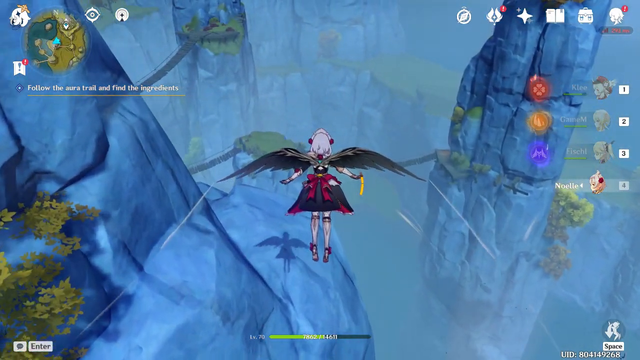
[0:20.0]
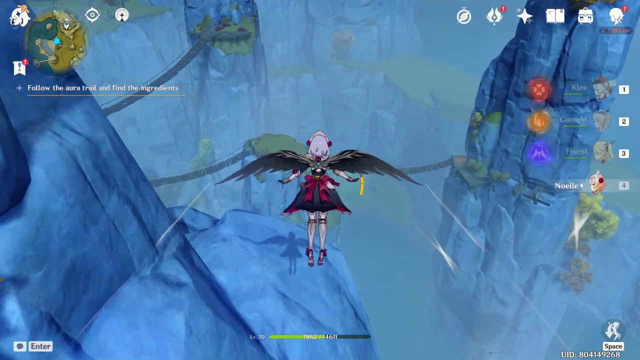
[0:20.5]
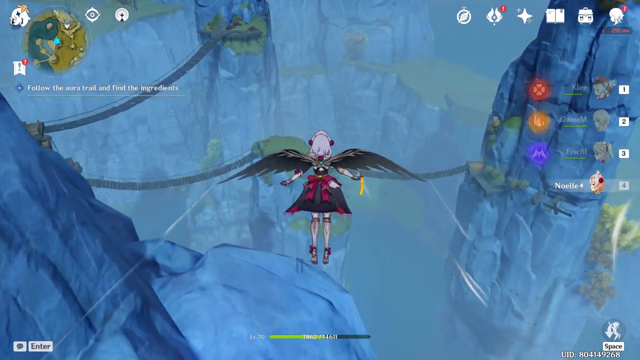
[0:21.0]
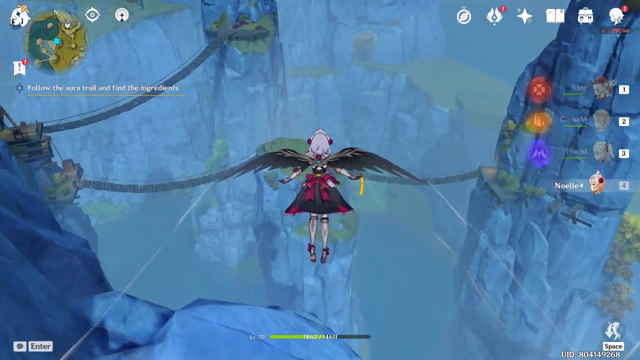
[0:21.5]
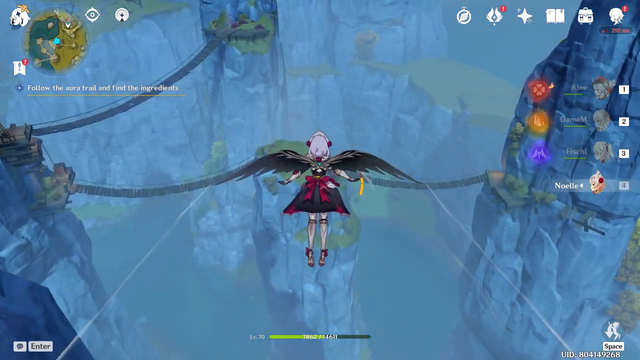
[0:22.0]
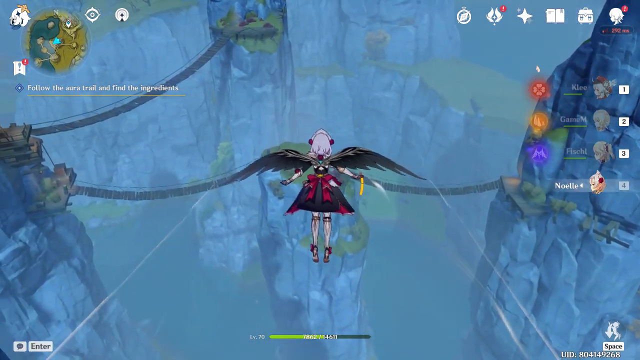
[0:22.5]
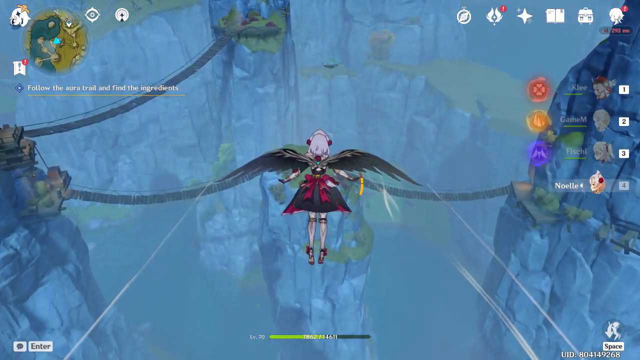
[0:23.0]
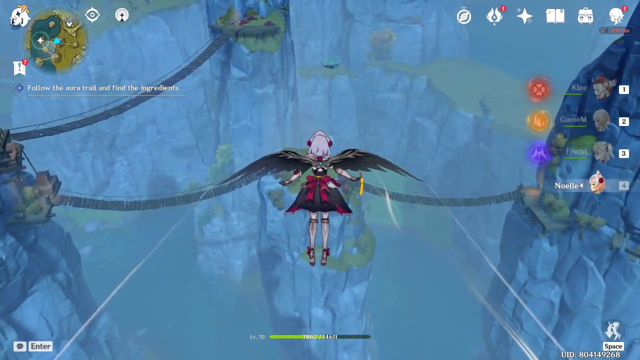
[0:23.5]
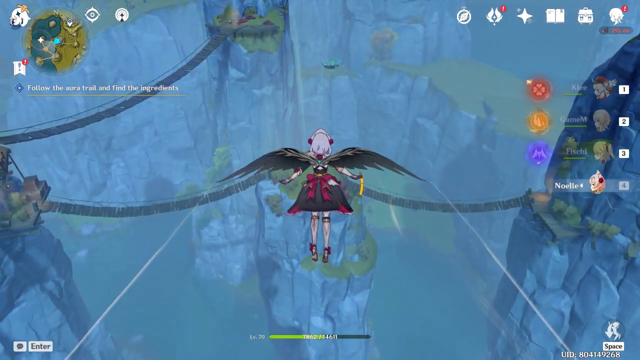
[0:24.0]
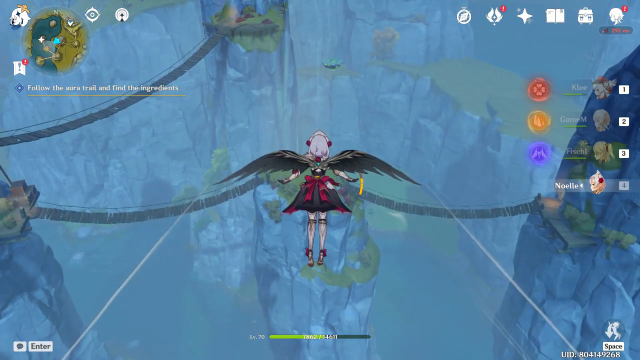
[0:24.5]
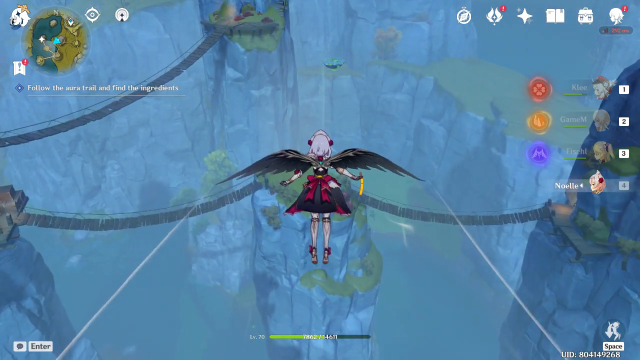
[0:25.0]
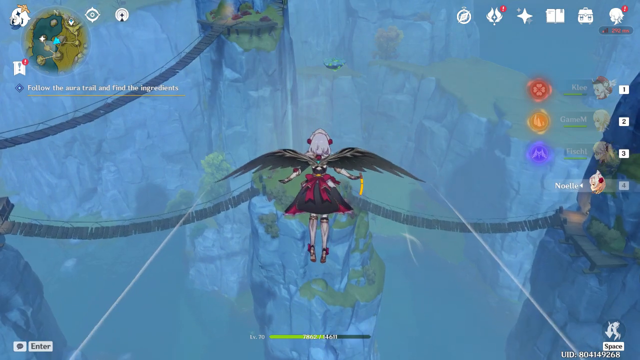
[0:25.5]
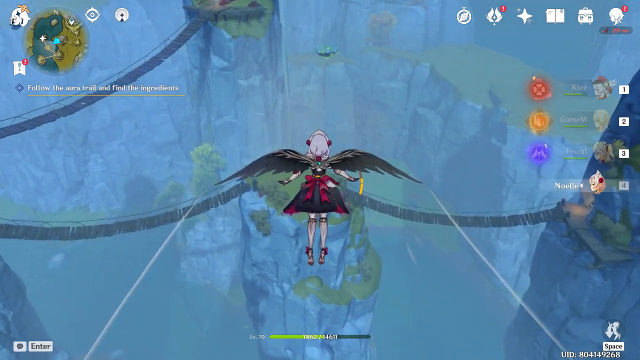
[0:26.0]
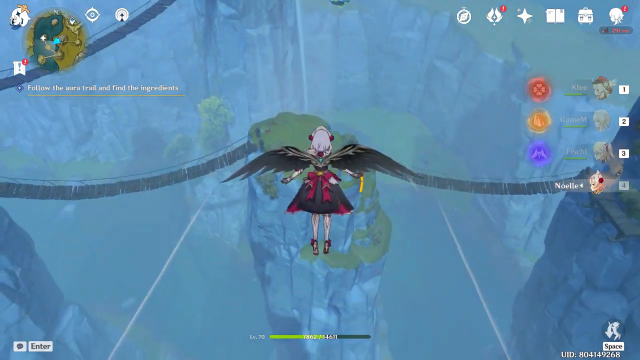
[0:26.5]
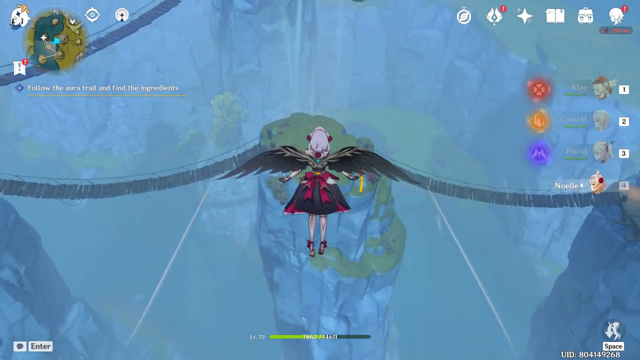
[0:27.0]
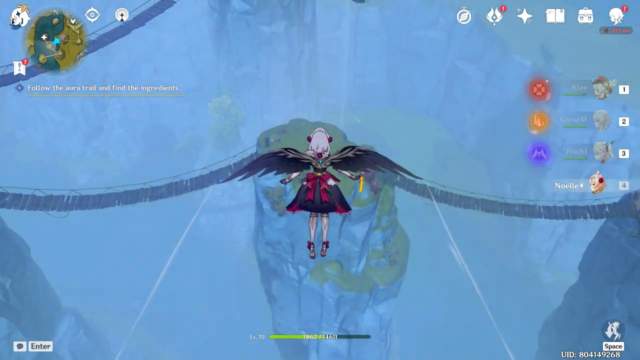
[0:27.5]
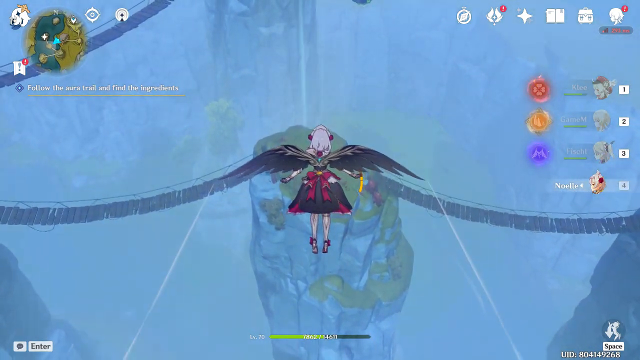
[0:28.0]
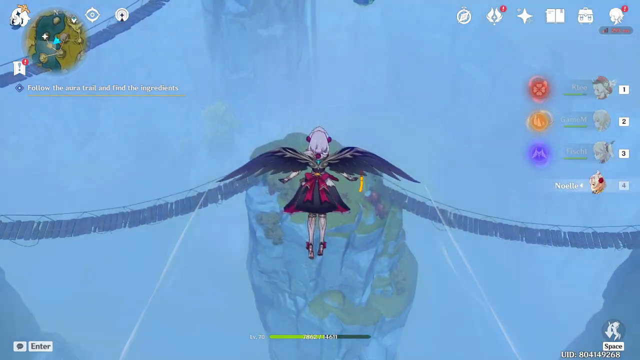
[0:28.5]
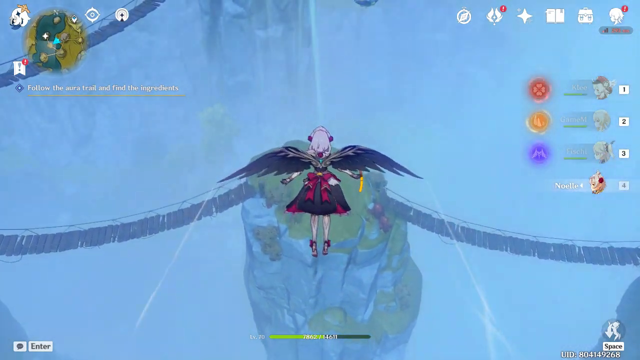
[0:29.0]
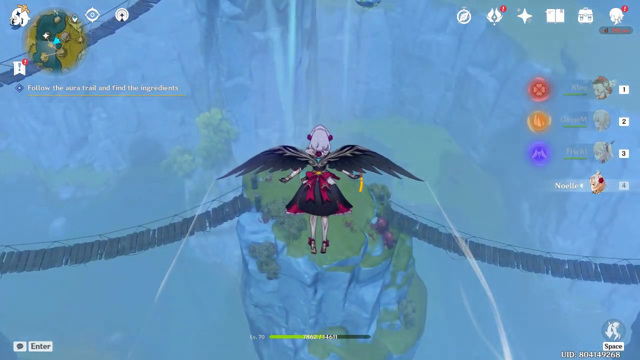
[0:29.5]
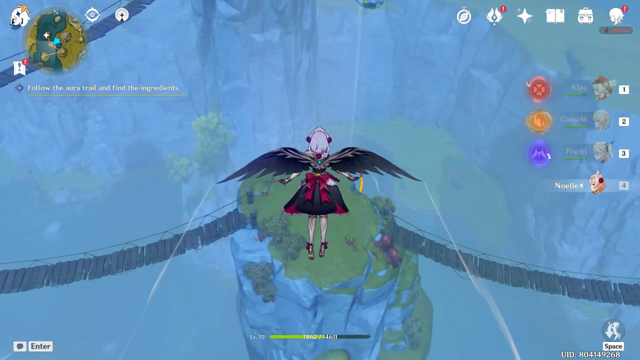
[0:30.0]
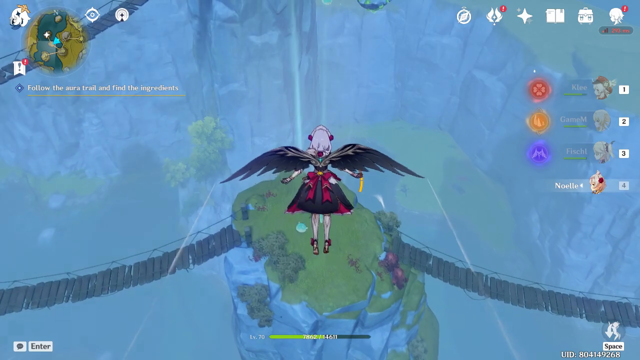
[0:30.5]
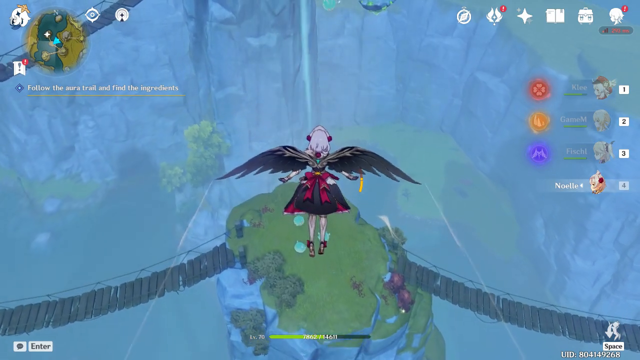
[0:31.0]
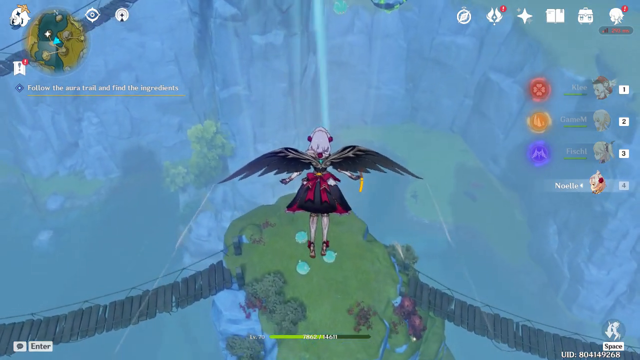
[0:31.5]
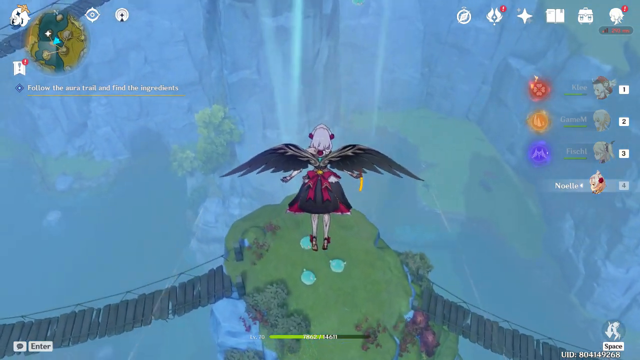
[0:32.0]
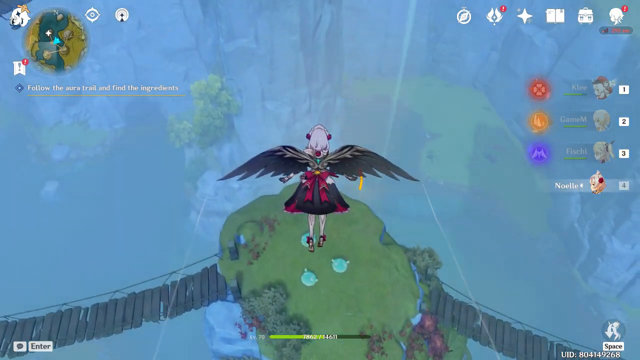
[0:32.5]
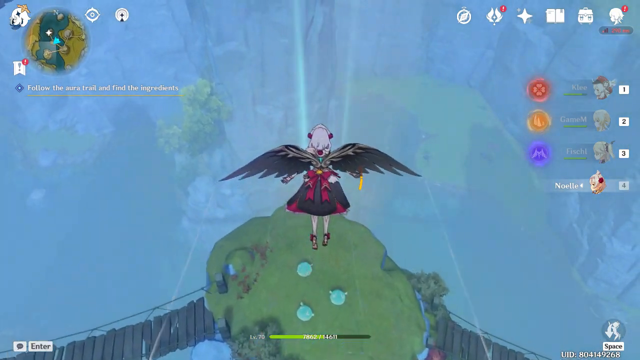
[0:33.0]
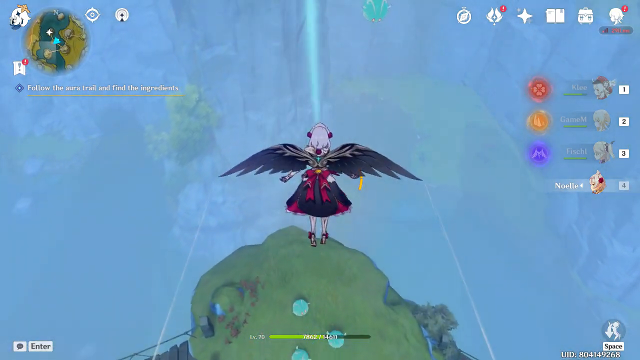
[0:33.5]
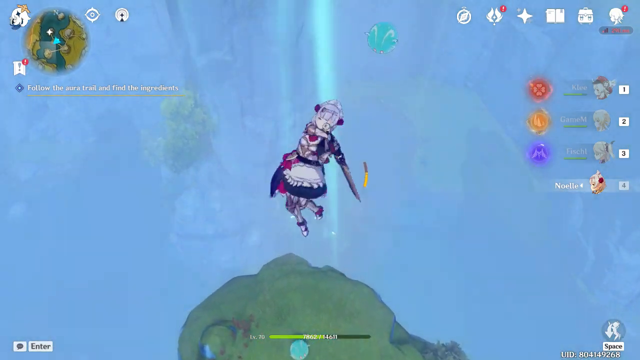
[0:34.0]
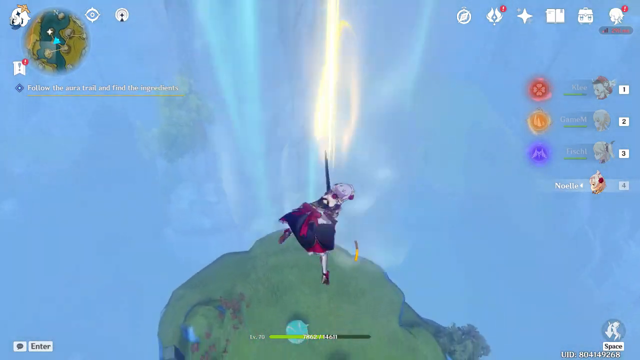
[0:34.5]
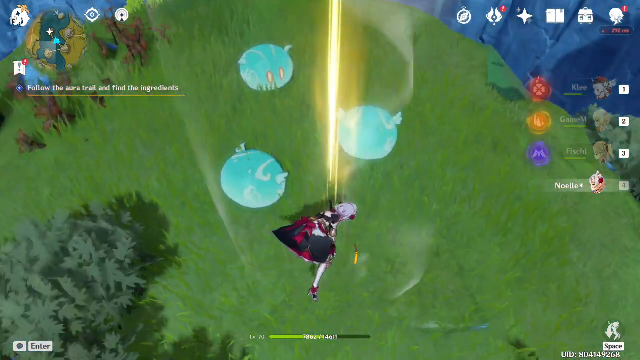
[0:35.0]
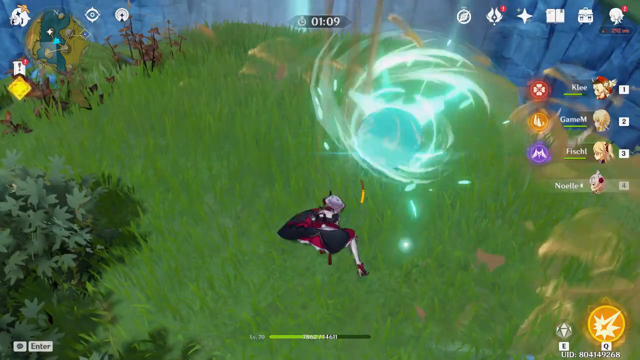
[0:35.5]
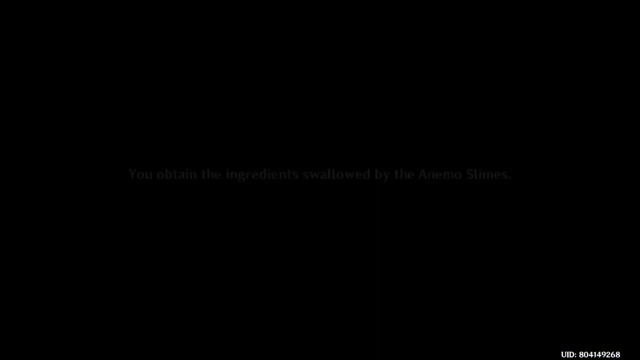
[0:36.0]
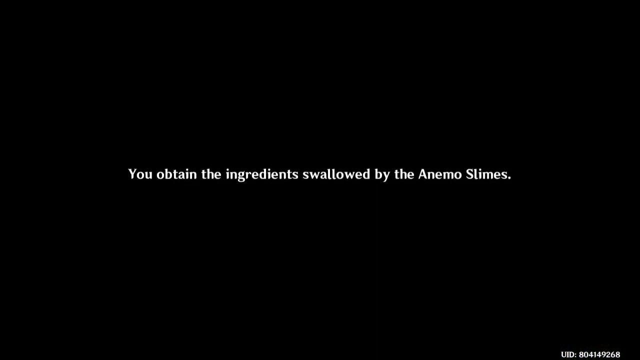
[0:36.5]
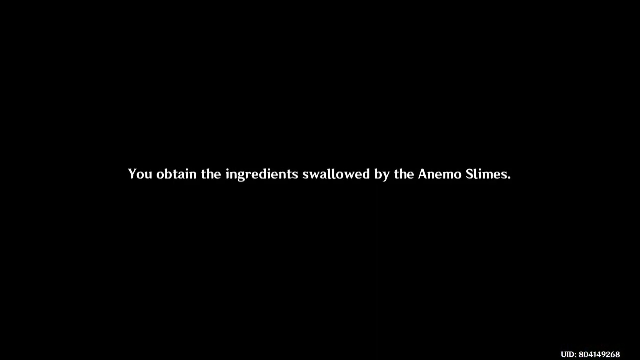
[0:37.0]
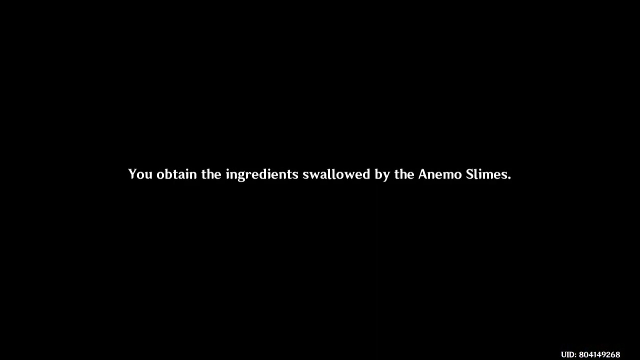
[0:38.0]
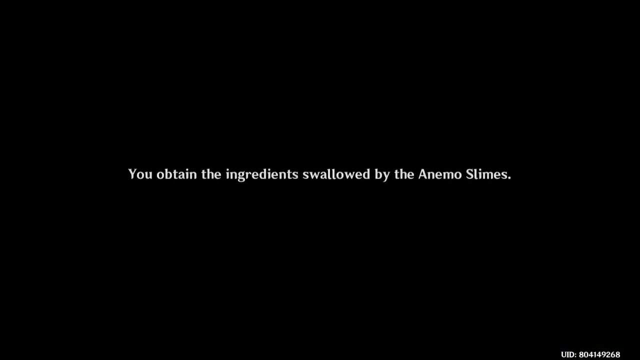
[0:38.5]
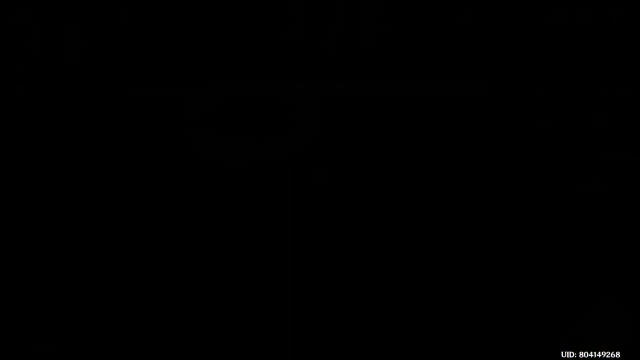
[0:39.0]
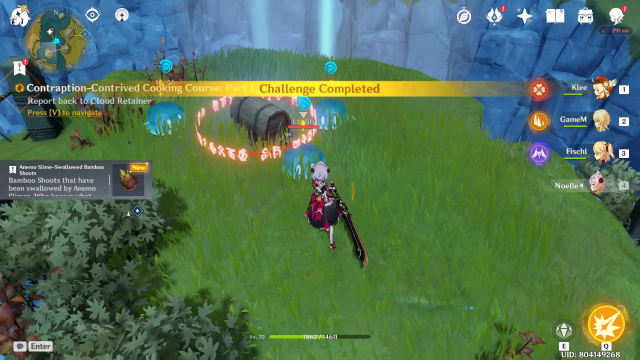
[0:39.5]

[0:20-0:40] The girl glides through the sky over a patch of land holding three big globs of jelly called amino slimes. With her black wings and her dress with a red bow on the back, she drops out of the sky with her fist extended and punches the ground. The slimes kind of evaporate, apparently eliminated by the punch. A message pops up on the screen saying "you have obtained the ingredient swallowed by the amino slimes", and text says "the challenge is completed". Her name is given as Raymond, and she apparently is collecting things for a spell. There is a chest in the grassy knoll area where she dropped from the sky; this area is at the top of the cliff and has two bridges extending to the left and the right. On the left-hand side are other names: Clee, Gamid, Fischl and Nolet, possibly members of her party.